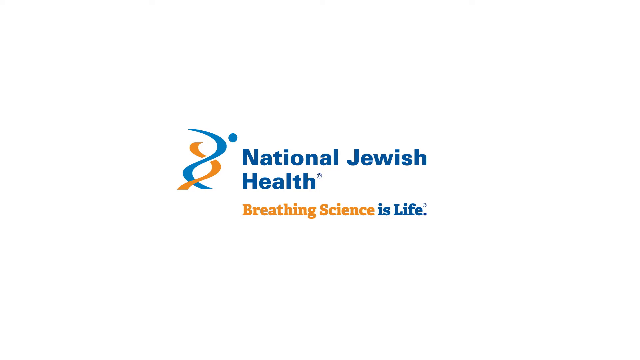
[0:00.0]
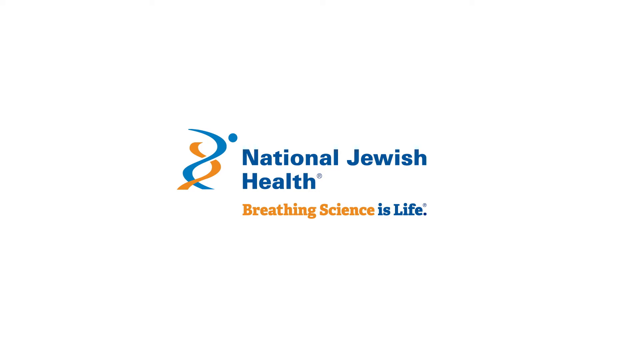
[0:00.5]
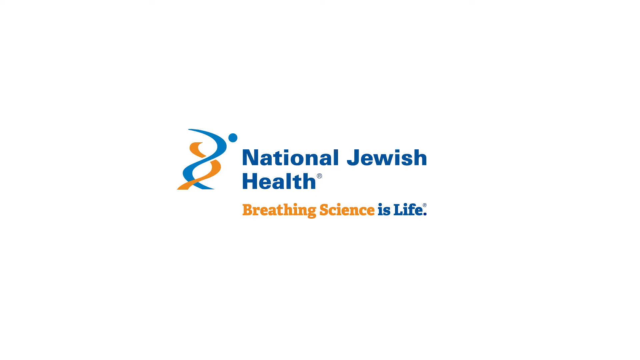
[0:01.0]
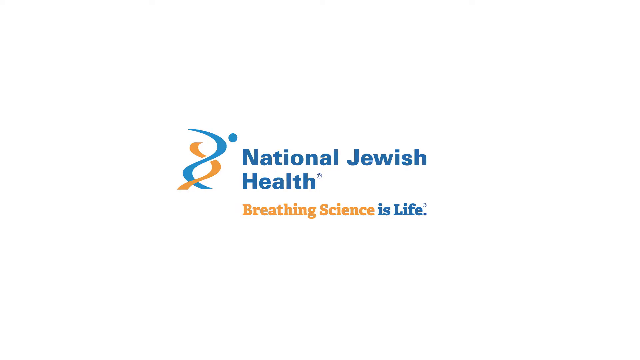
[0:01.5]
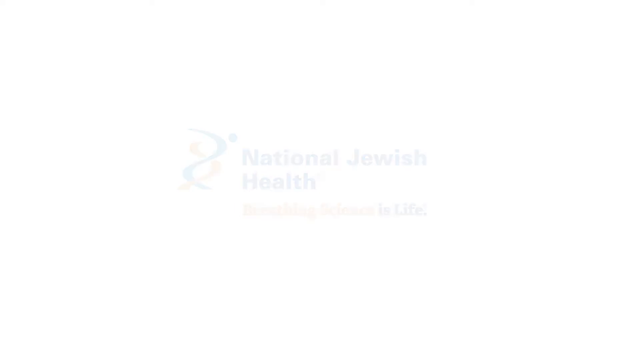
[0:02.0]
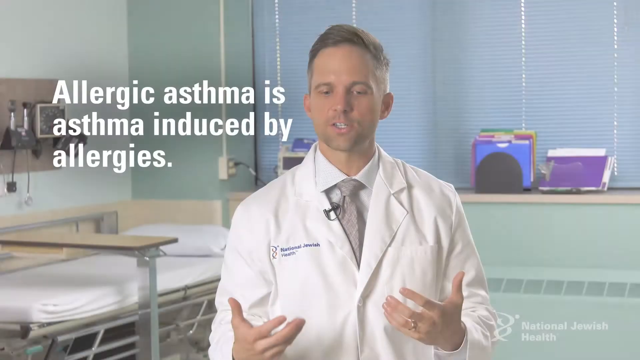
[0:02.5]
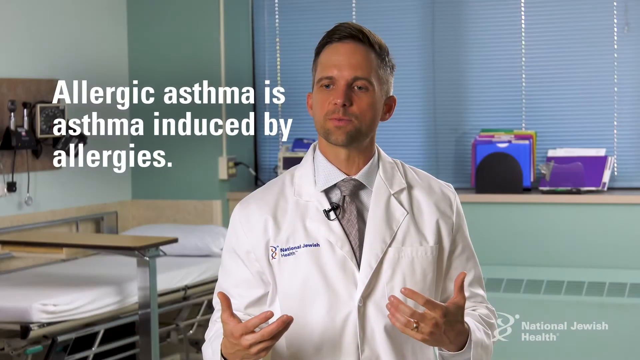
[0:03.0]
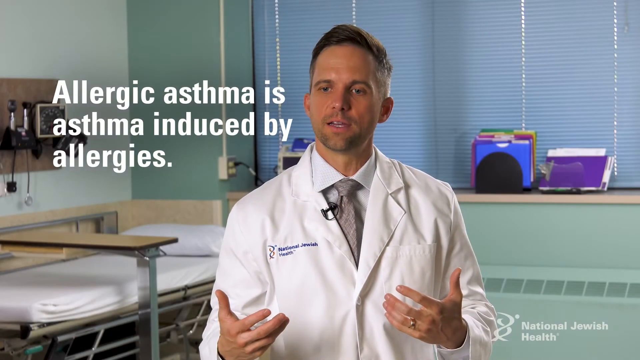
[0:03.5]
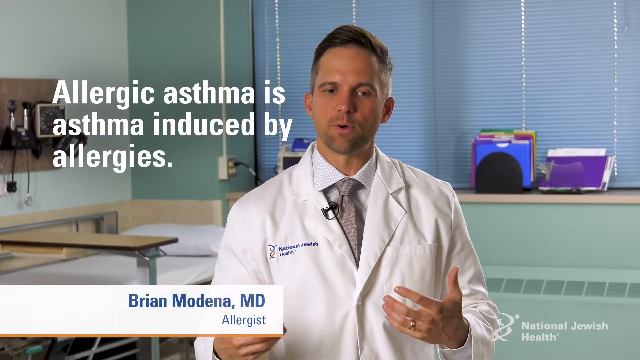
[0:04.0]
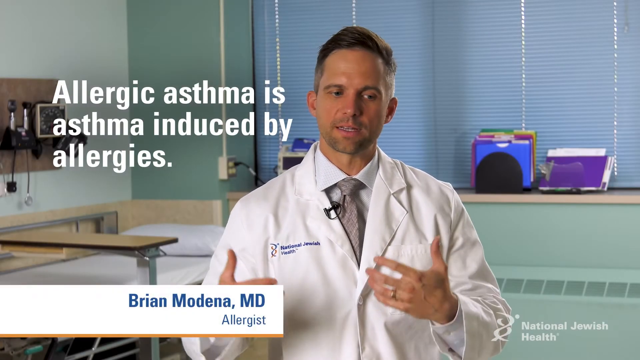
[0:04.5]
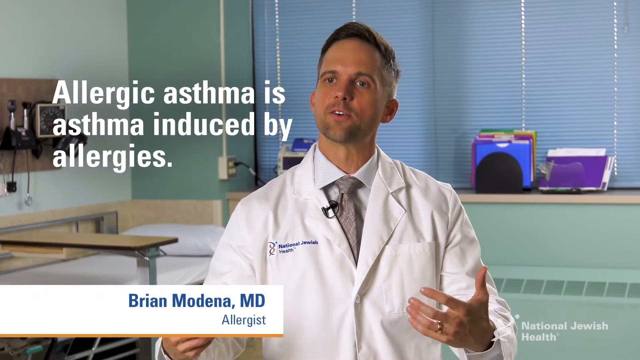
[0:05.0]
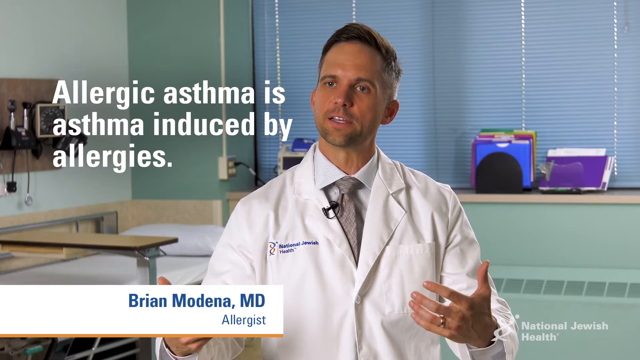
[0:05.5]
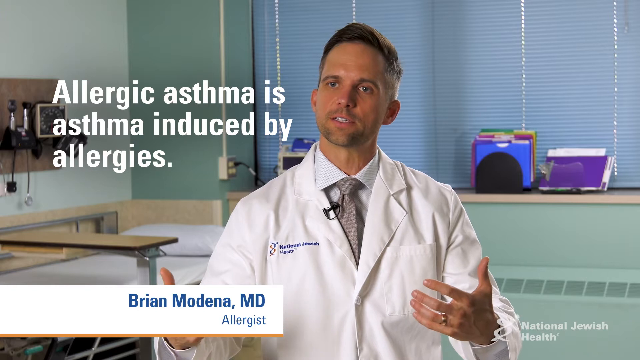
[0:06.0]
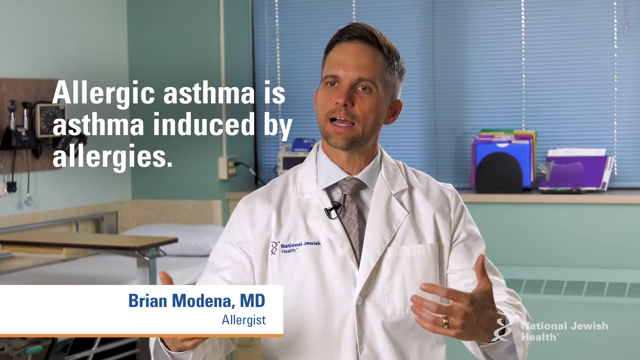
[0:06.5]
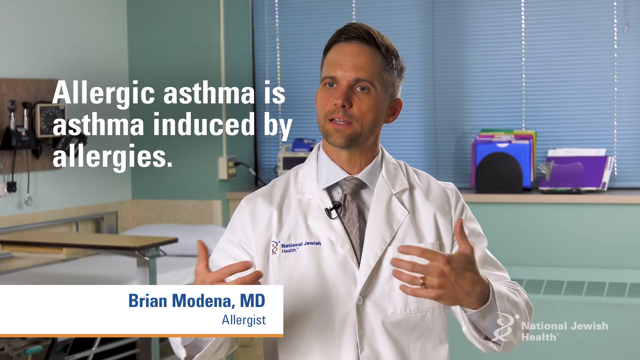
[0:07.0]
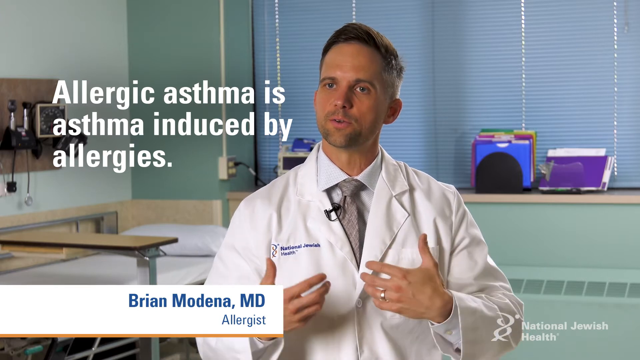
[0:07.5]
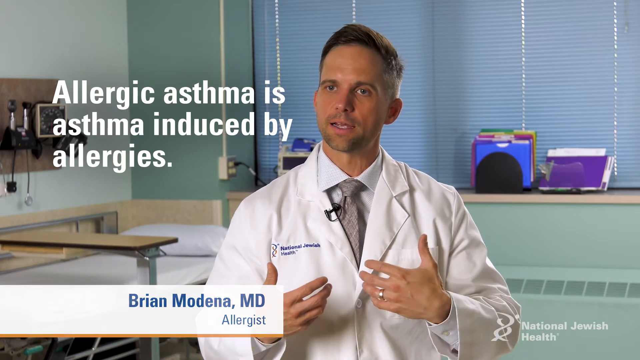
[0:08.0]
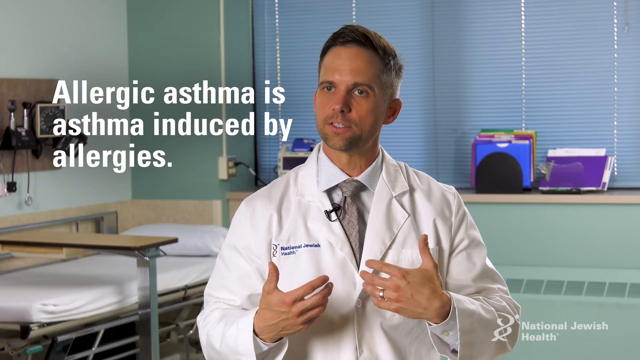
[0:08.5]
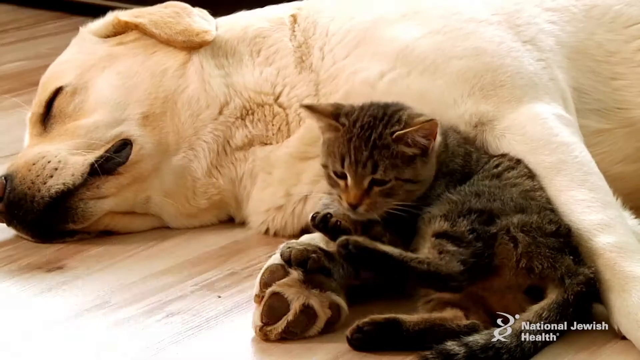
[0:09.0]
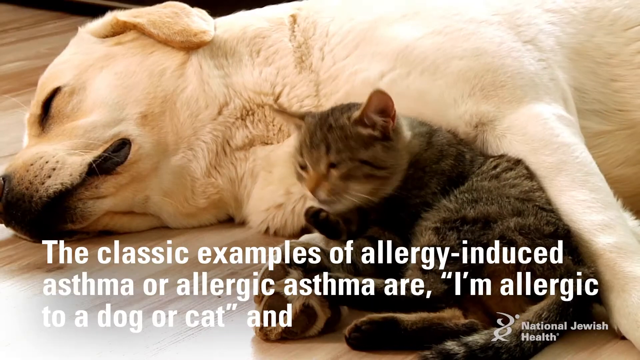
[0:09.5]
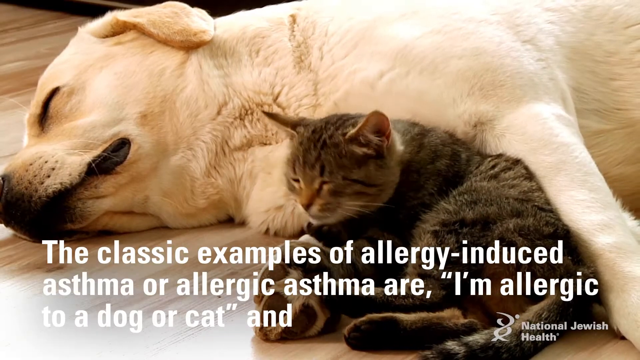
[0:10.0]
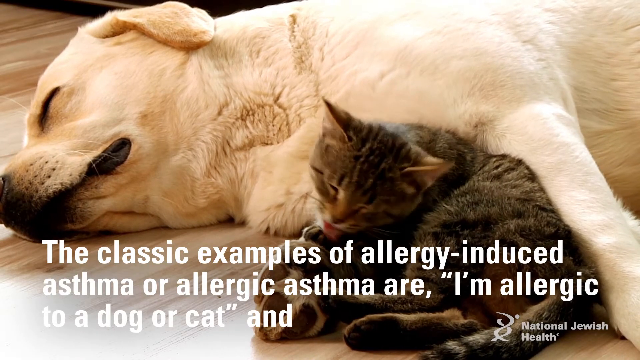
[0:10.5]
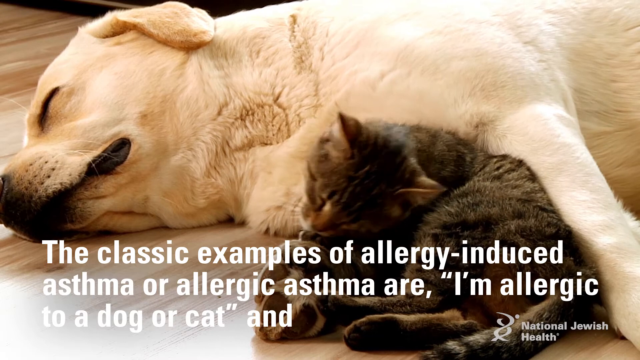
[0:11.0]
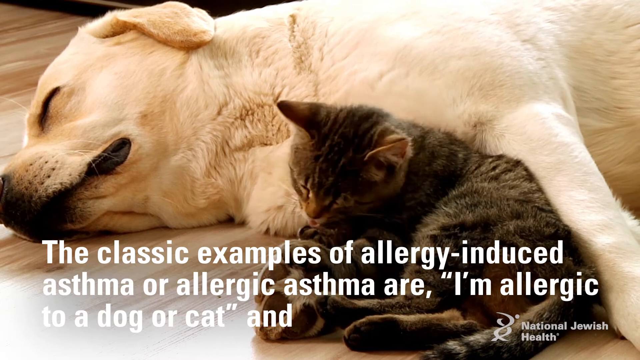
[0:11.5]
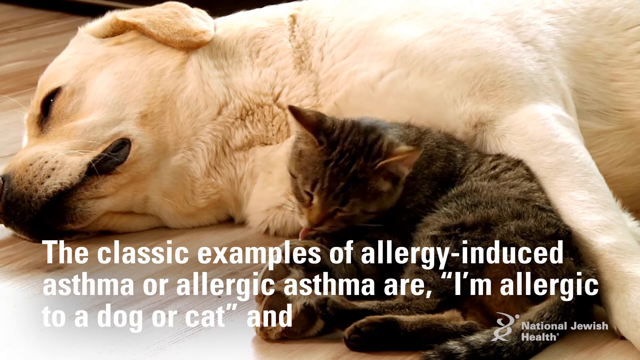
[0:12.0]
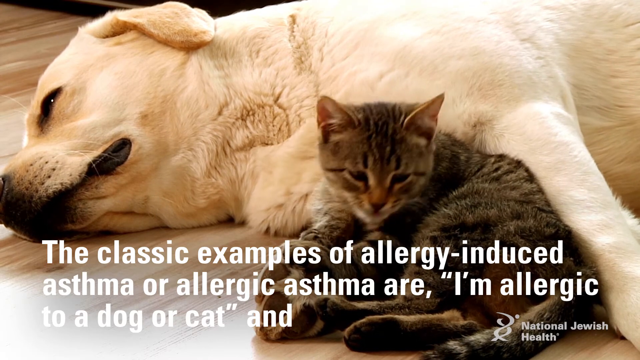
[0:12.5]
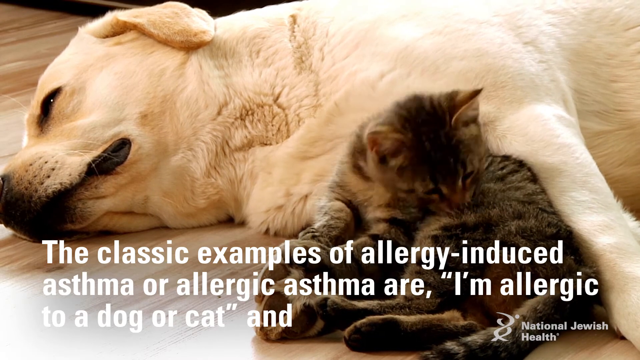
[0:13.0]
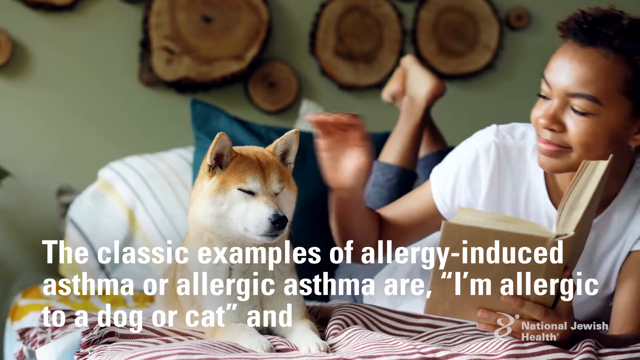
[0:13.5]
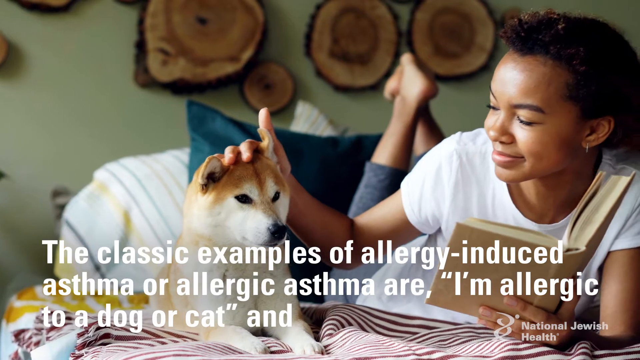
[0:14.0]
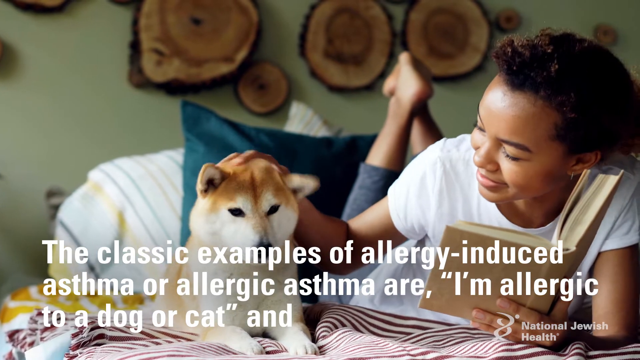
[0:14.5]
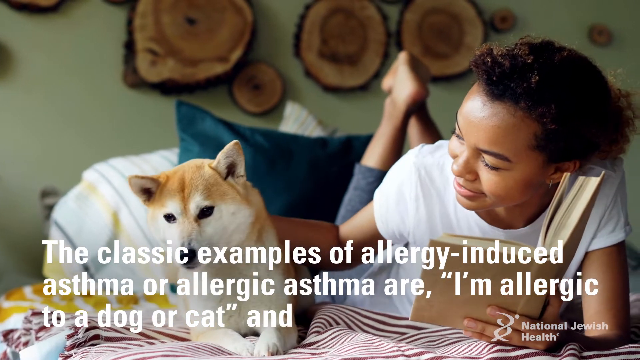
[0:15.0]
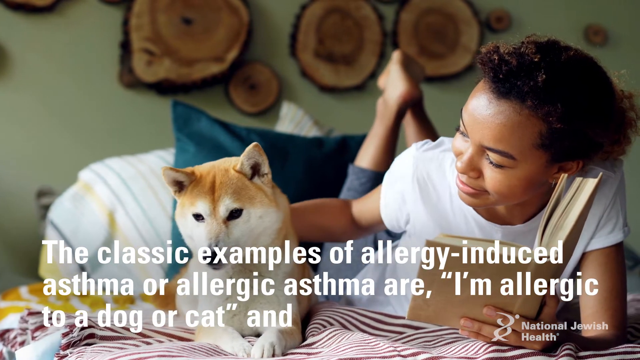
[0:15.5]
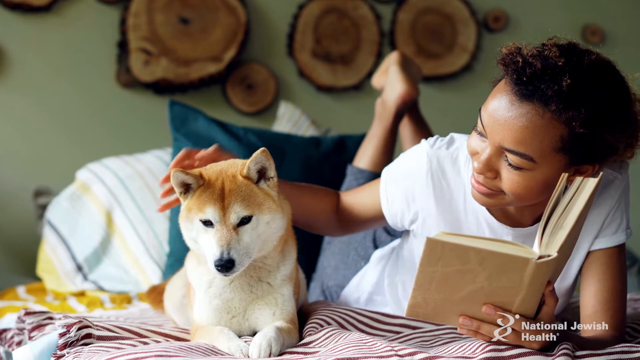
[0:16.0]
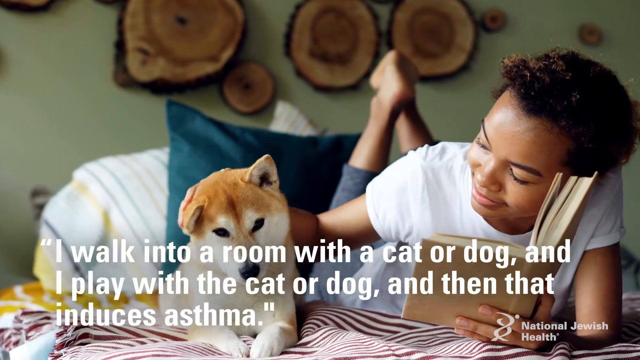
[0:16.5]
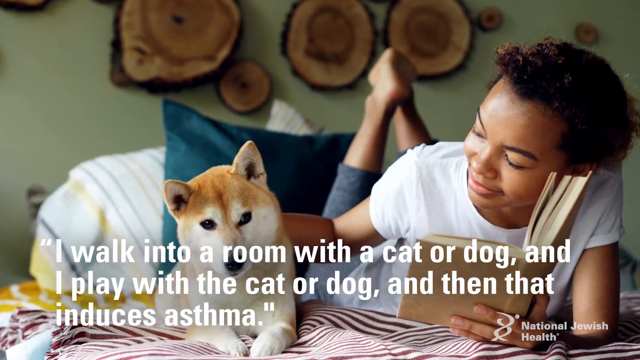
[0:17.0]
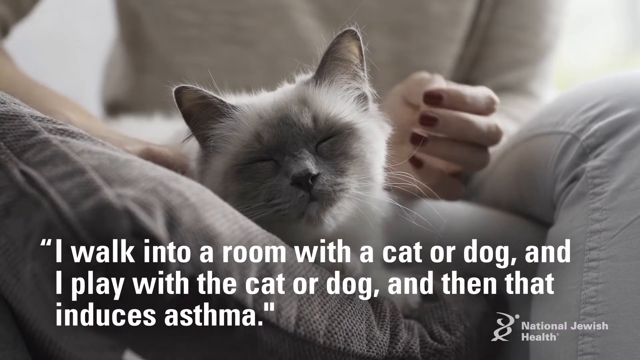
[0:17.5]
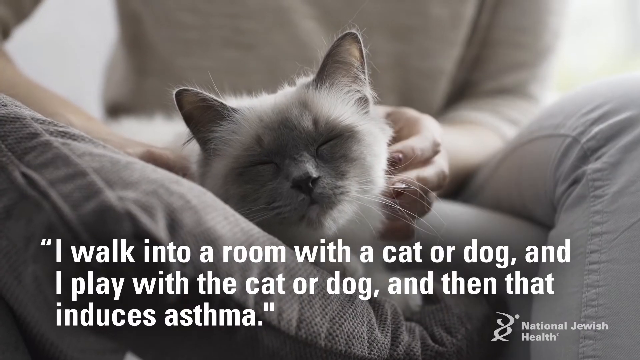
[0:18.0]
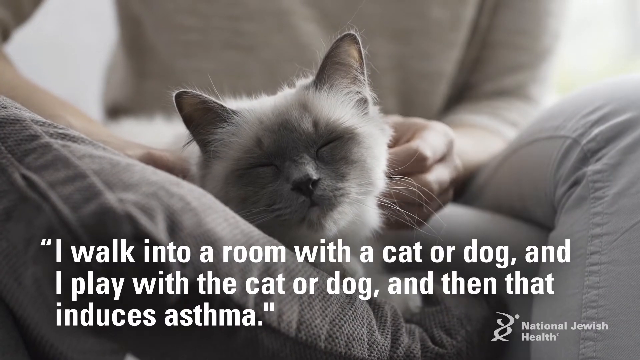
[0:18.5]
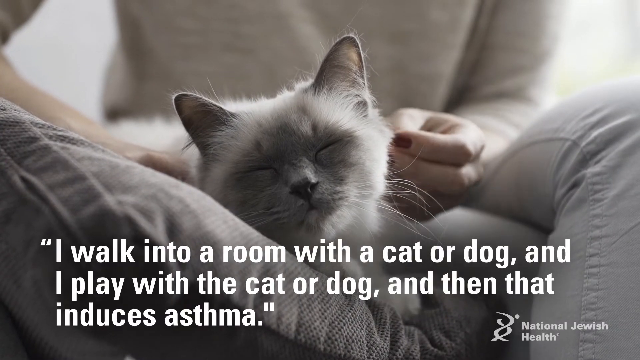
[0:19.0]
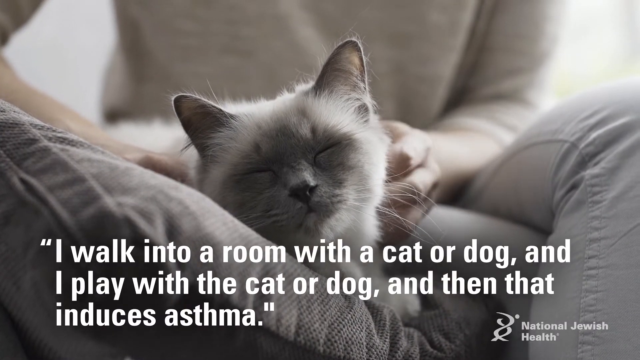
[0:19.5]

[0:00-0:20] The video is from National Jewish Health. The opening screen reads "National Jewish Health" and "Breathing Sciences is life" on a white background with gray at the bottom of the page; "Breathing Science" is in gold print while the rest is in blue print. A man, an allergist, stands and talks.